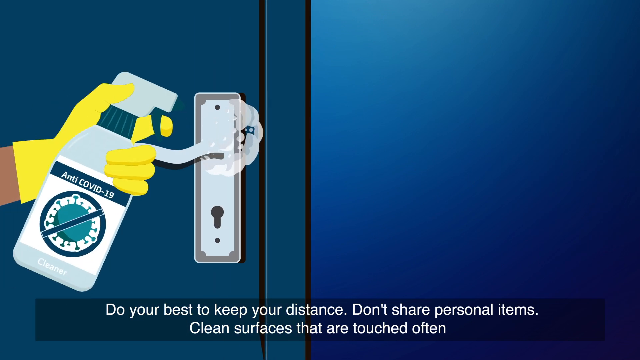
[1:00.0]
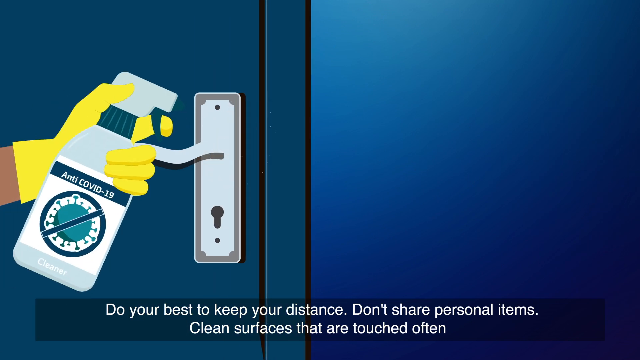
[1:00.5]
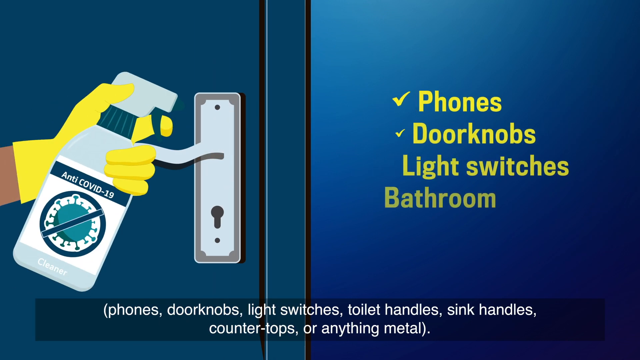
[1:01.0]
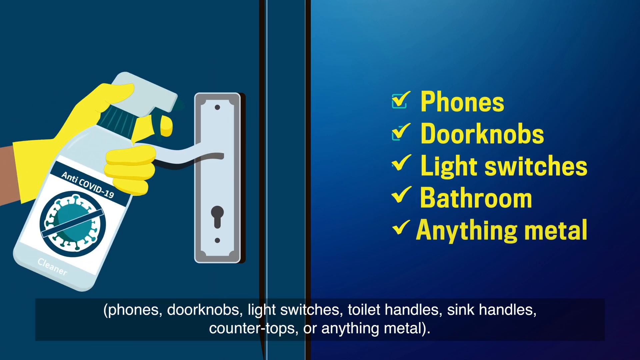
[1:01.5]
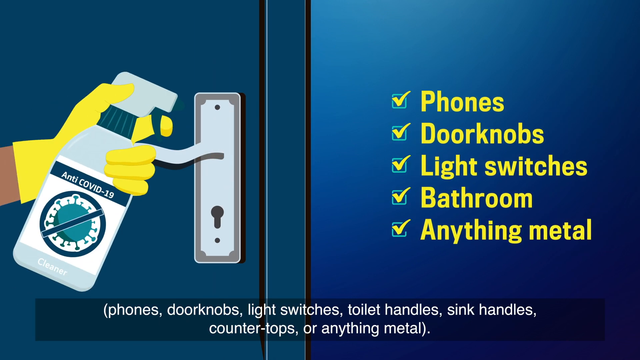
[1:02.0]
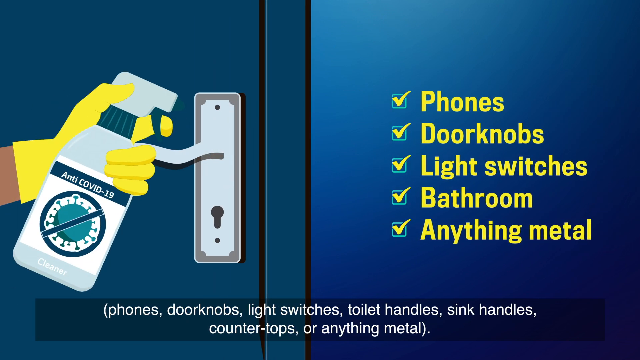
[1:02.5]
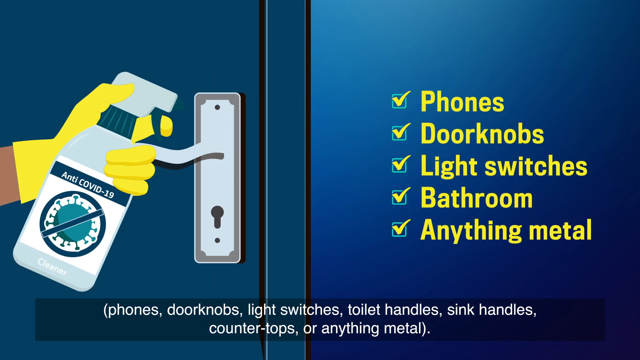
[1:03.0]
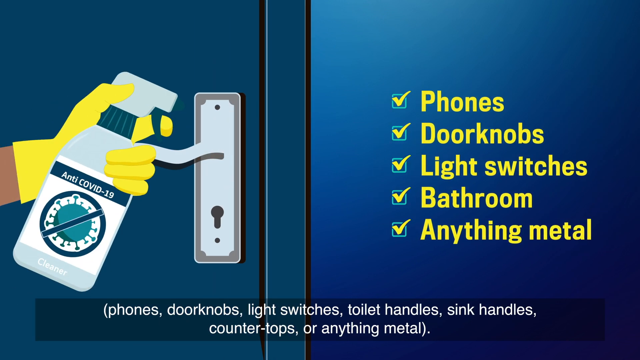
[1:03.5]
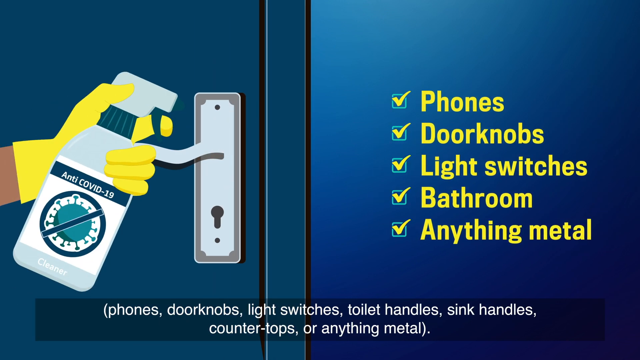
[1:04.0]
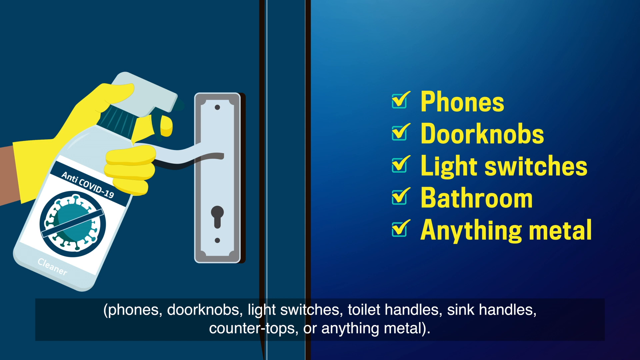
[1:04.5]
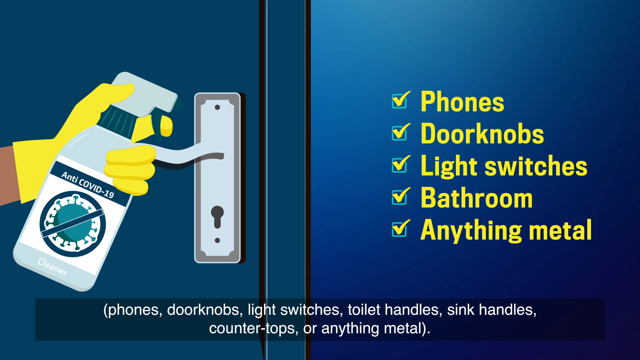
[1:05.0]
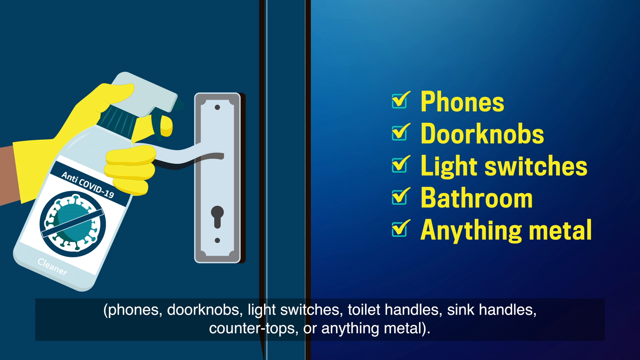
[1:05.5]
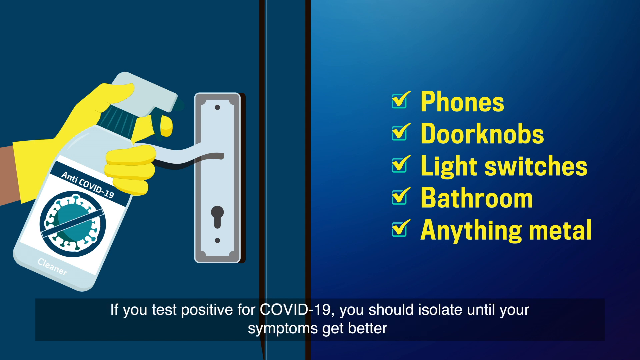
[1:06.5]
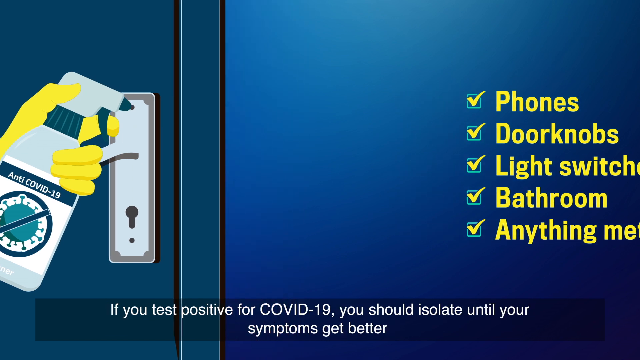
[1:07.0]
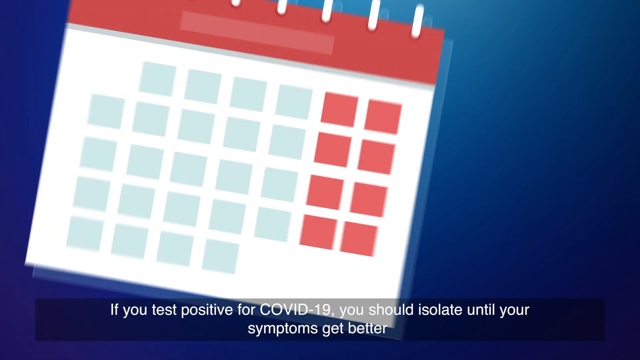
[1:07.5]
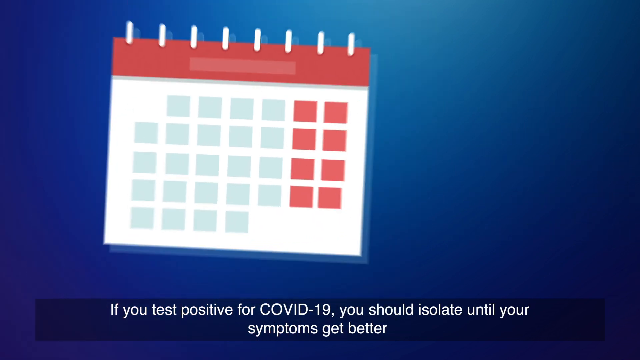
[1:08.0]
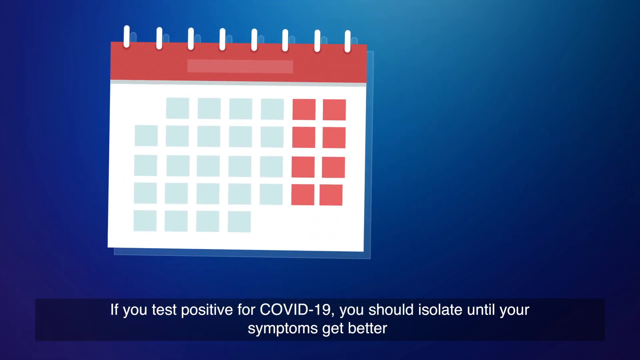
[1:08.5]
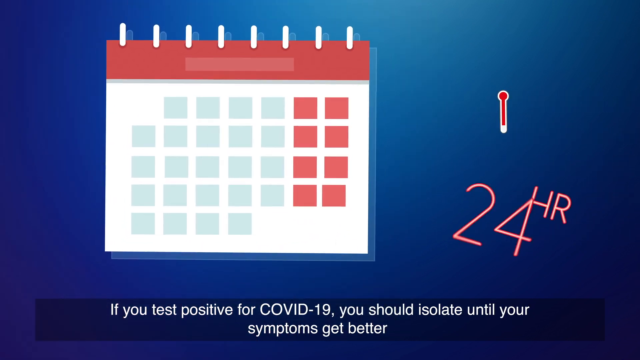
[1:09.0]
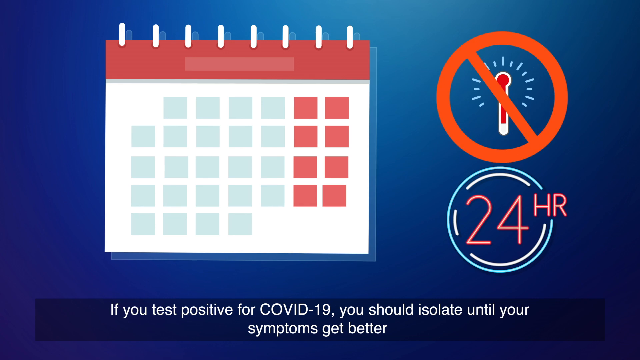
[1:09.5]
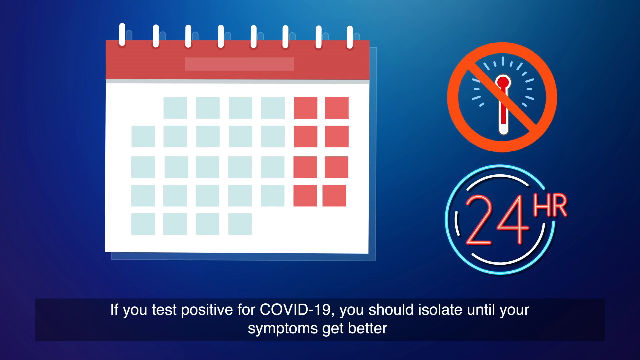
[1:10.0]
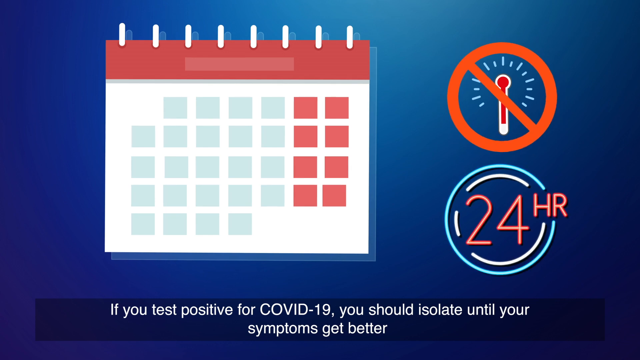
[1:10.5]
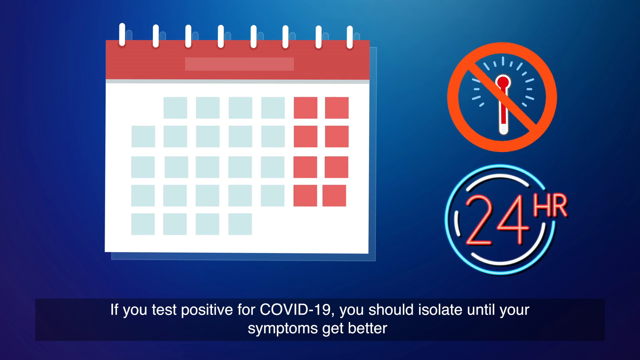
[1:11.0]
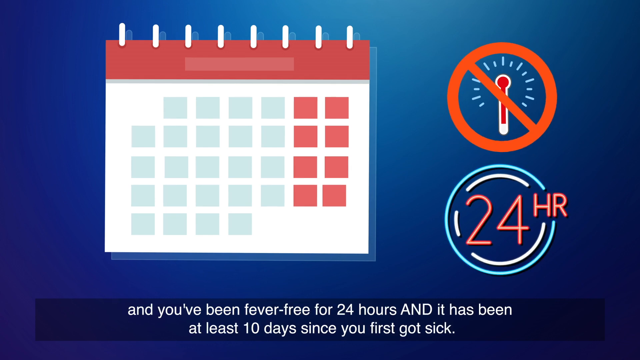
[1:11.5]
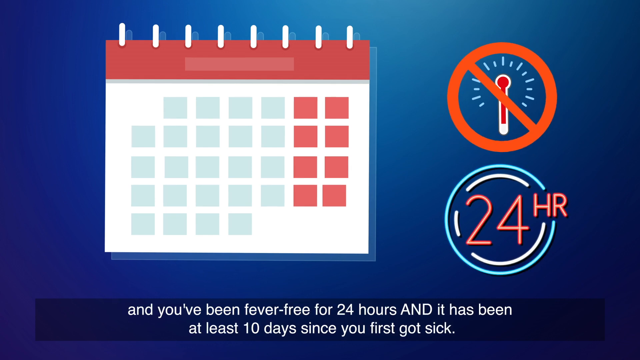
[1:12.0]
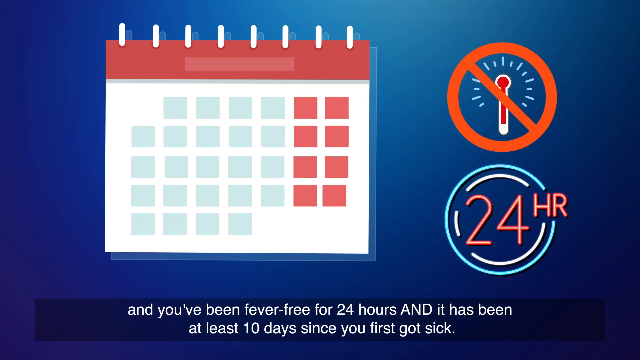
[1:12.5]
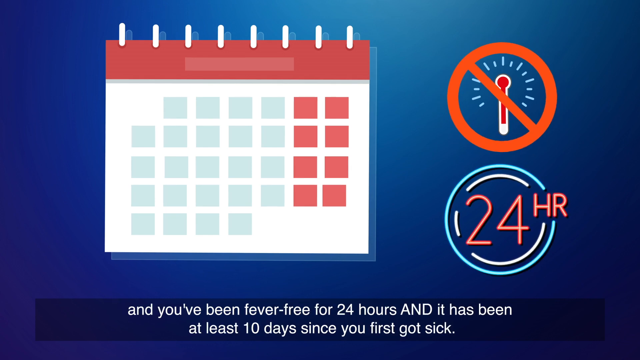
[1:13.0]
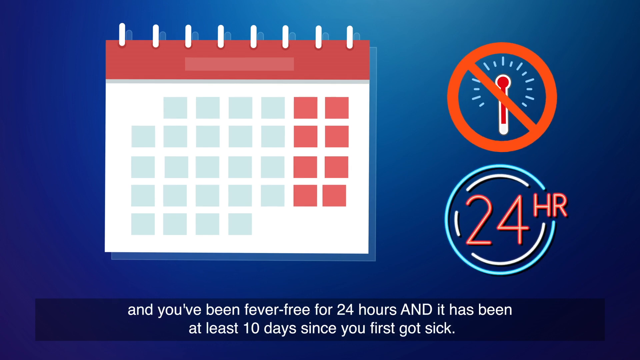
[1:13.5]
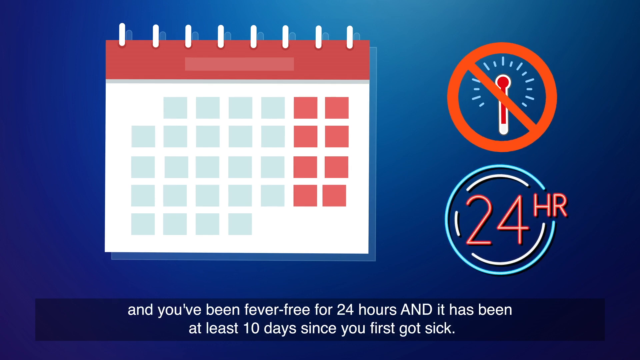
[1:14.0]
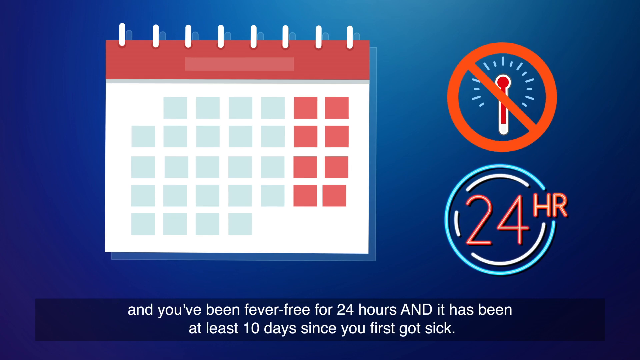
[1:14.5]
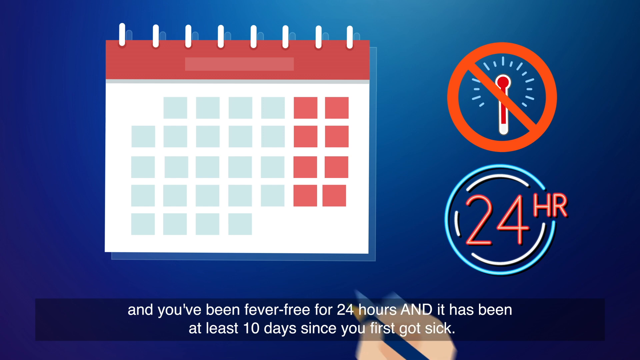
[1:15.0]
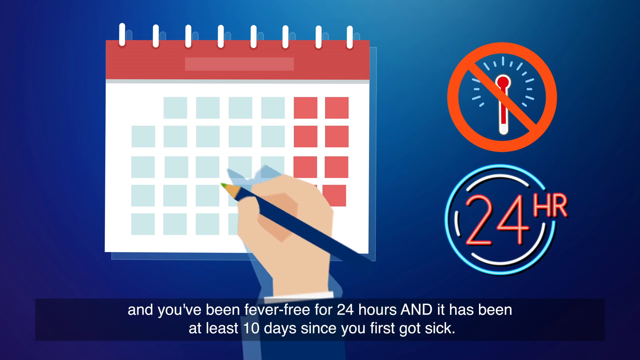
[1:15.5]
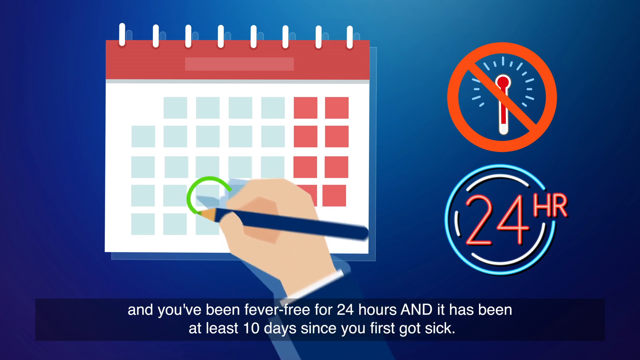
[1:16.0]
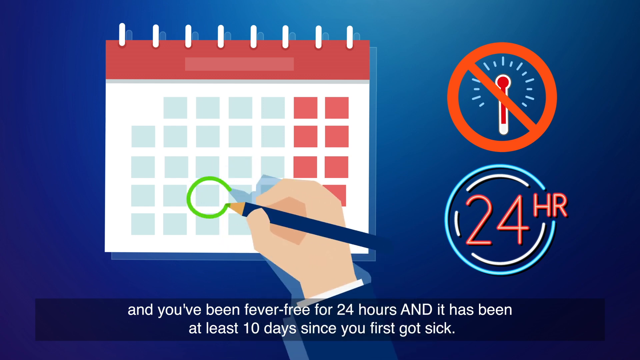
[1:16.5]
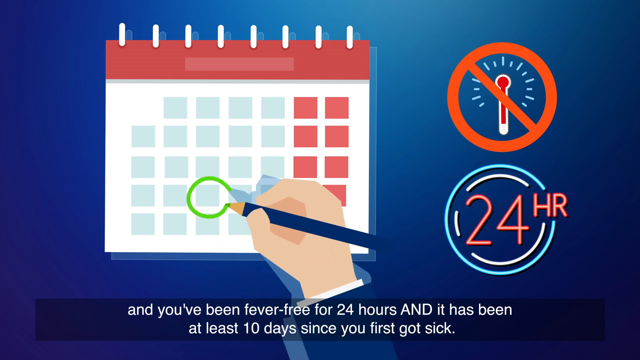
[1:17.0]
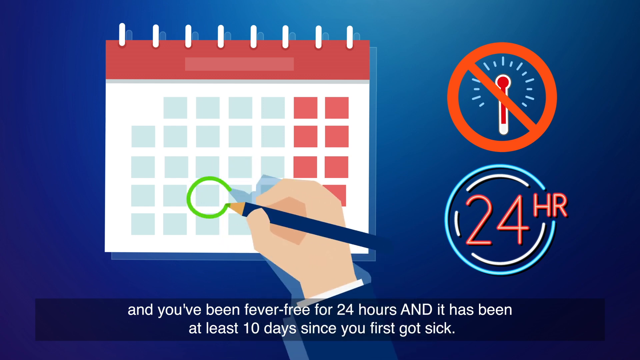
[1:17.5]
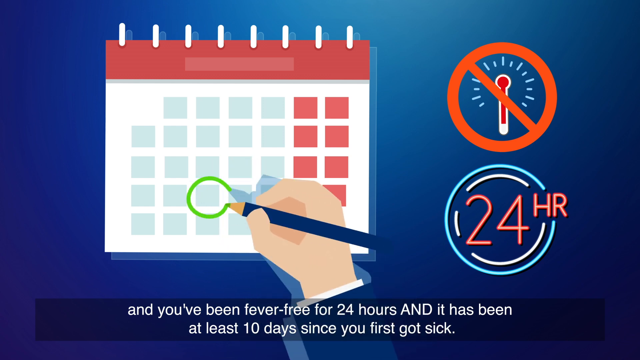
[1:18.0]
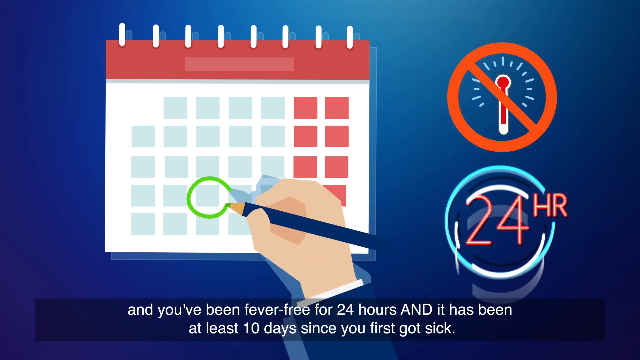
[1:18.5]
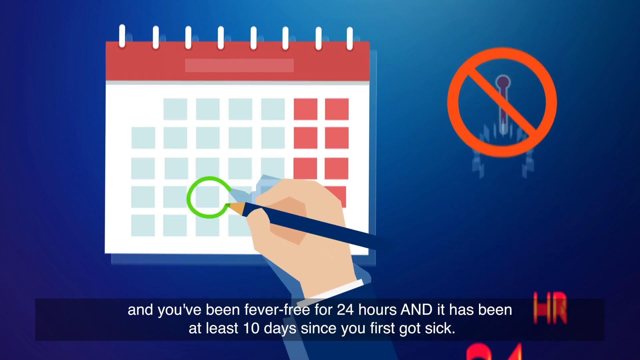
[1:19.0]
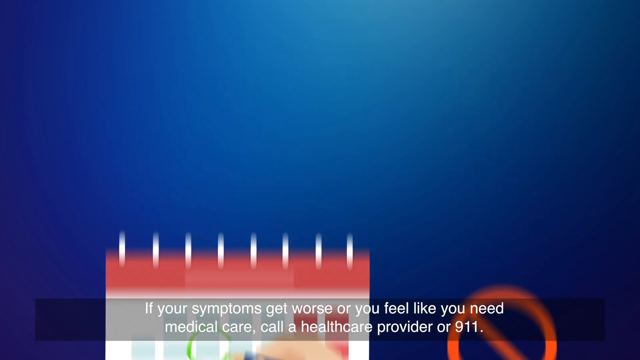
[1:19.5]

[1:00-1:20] An animated drawing shows a dark blue door on the left side of the screen with a silver door handle. A left hand comes from the left side of the screen holding a white bottle, index finger on the trigger. The bottle says "anti-COVID-19", and the hand sprays the door toward the right side of the screen. Words appear one above the other in yellow letters, with boxes to their left containing yellow check marks. They read "phones, doorknobs, light switches, bathroom, anything metal". That disappears, and a drawing of a calendar appears. To the right of the calendar is a thermometer with a circle around it that has a line through it. Below that are the words "24 hours".